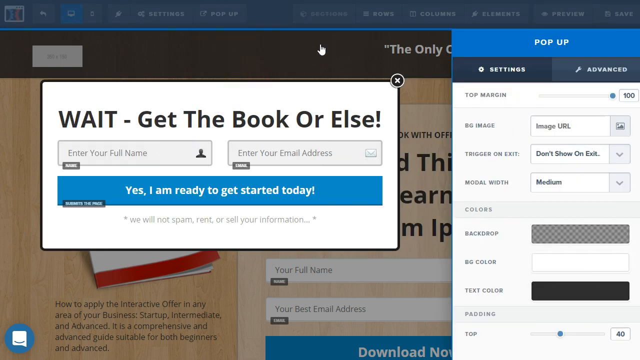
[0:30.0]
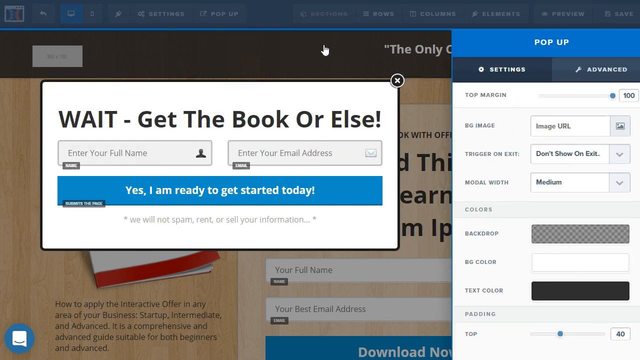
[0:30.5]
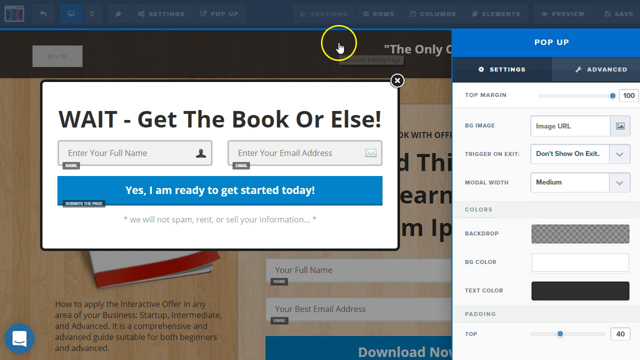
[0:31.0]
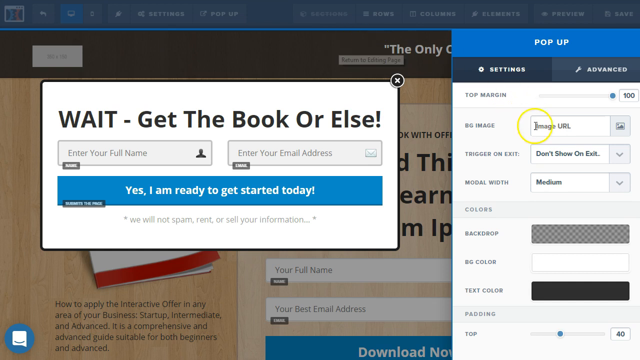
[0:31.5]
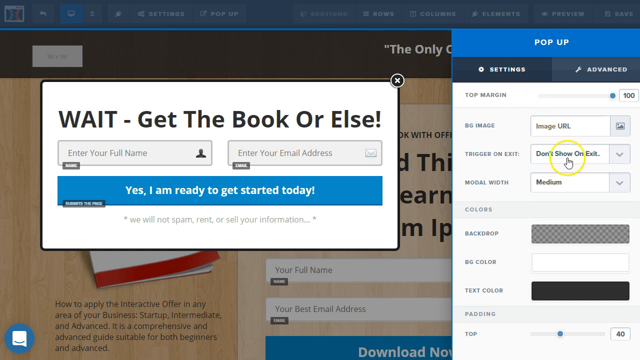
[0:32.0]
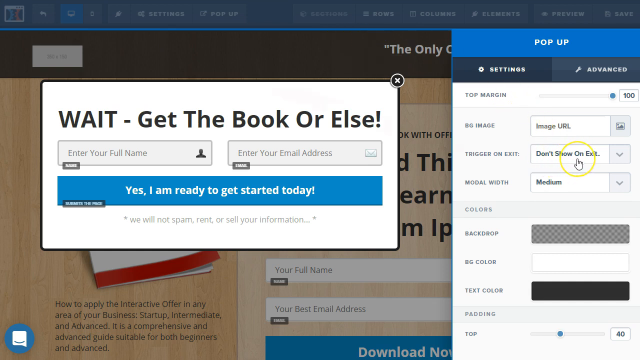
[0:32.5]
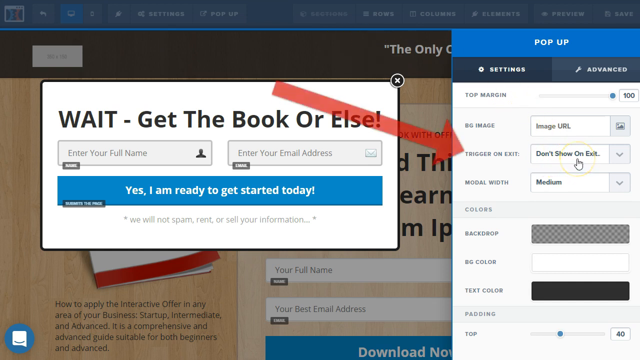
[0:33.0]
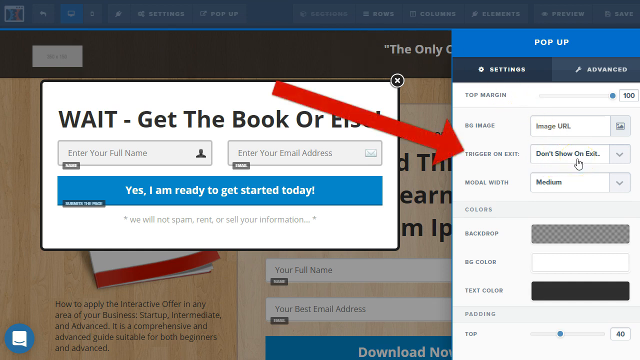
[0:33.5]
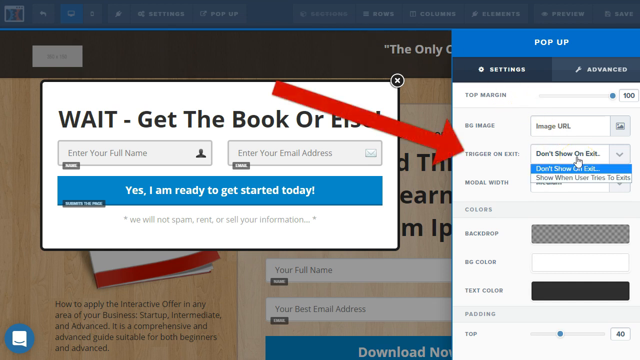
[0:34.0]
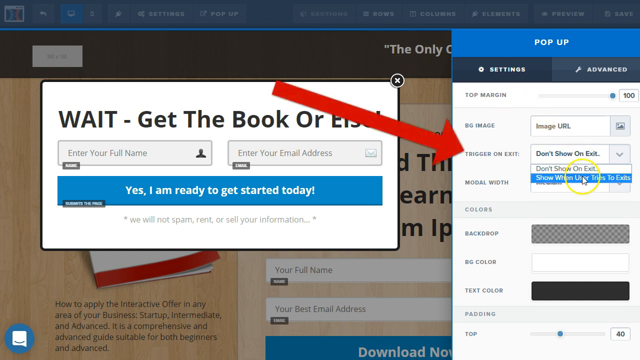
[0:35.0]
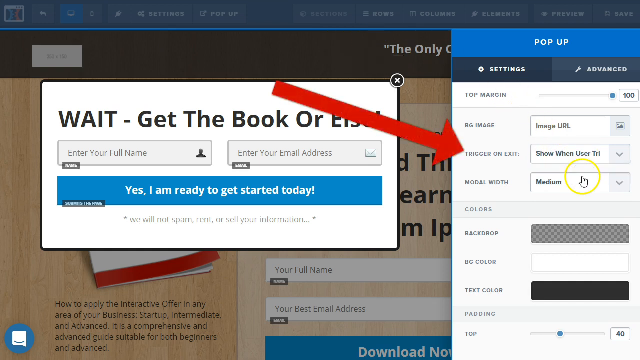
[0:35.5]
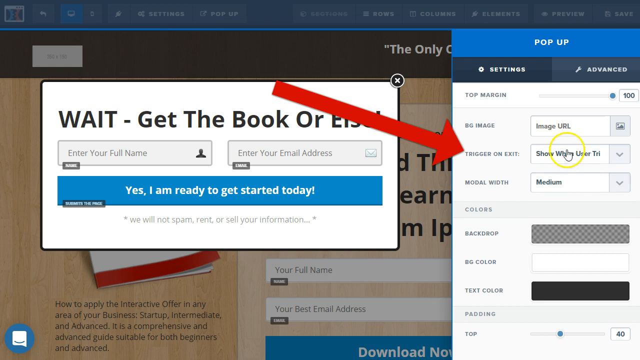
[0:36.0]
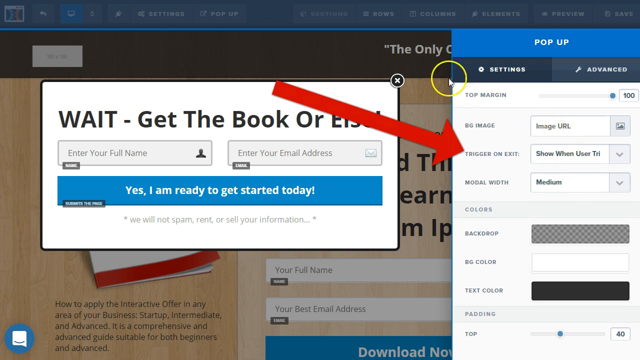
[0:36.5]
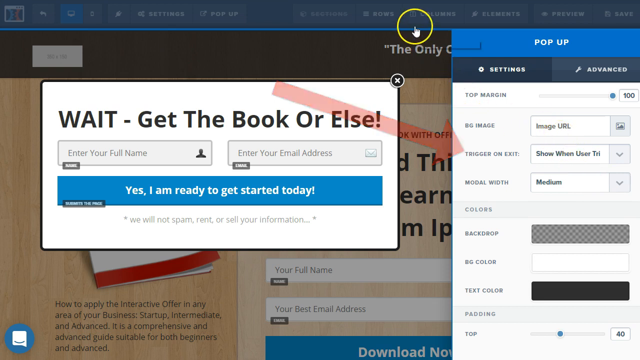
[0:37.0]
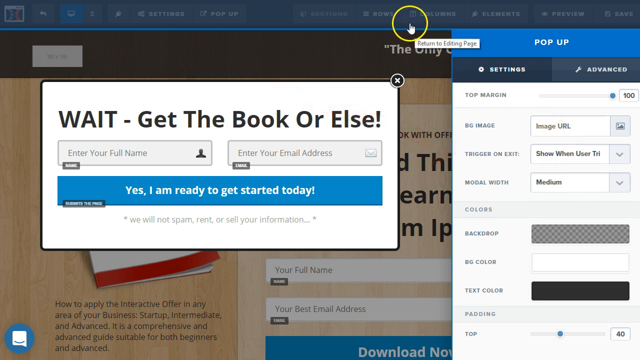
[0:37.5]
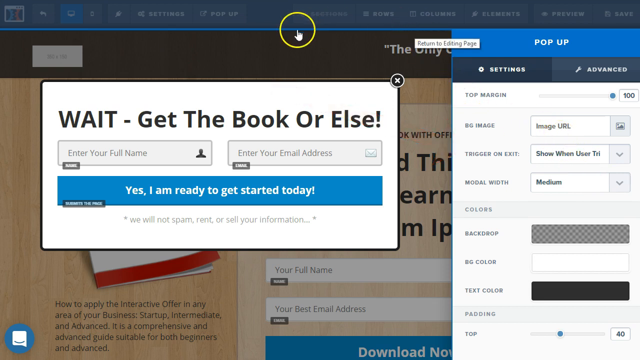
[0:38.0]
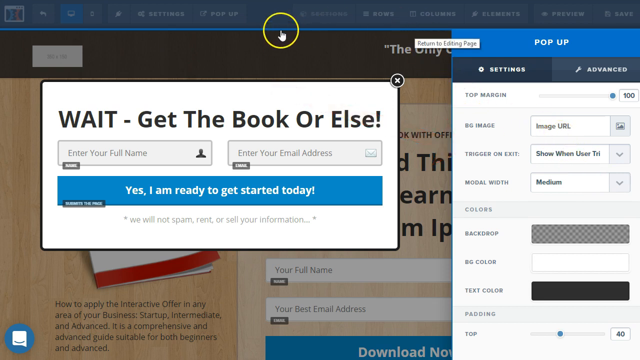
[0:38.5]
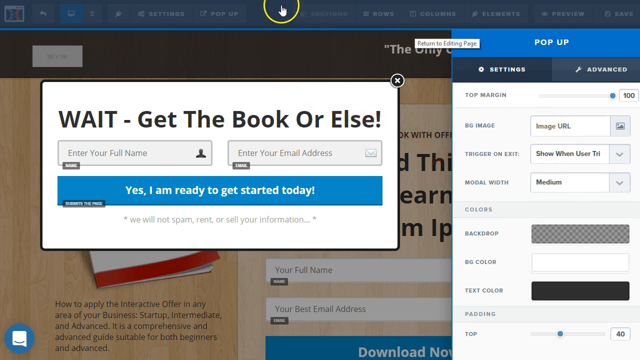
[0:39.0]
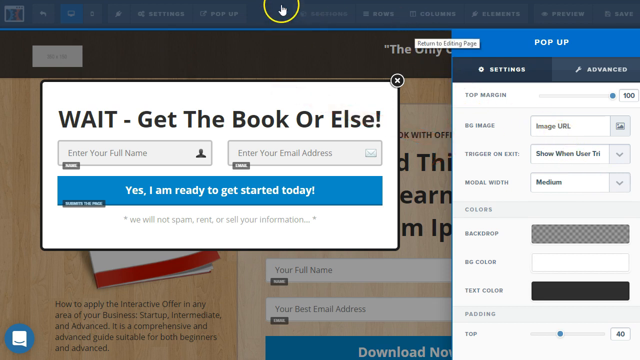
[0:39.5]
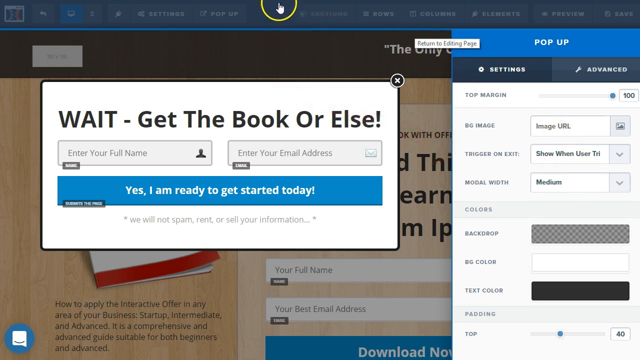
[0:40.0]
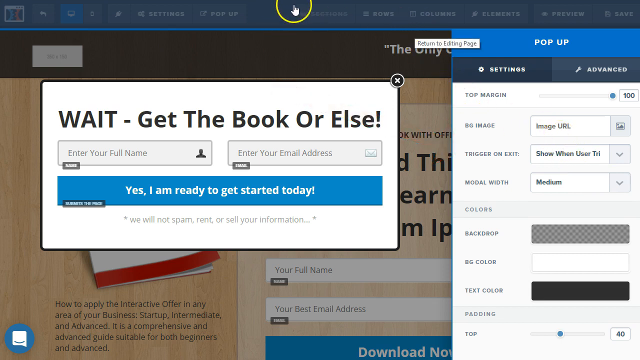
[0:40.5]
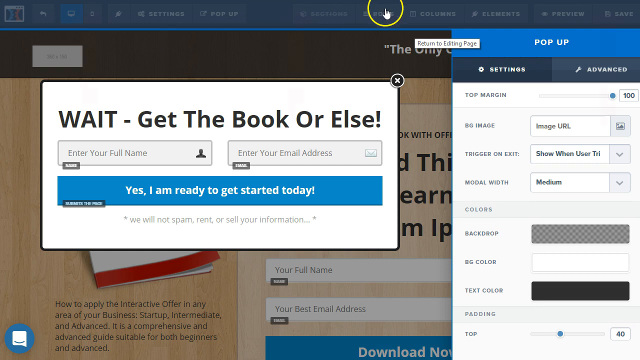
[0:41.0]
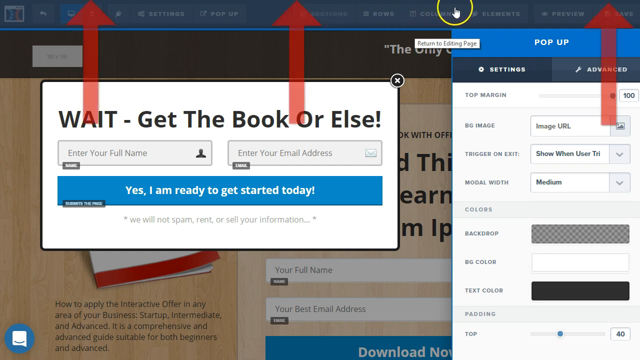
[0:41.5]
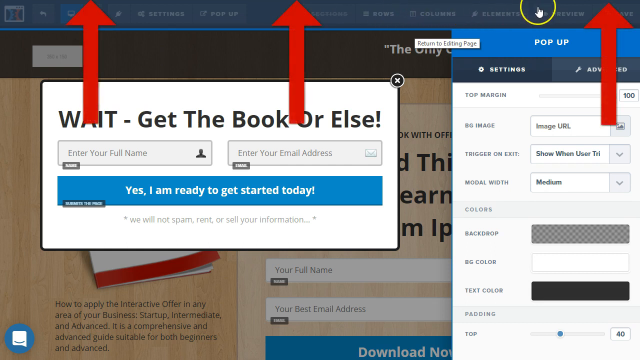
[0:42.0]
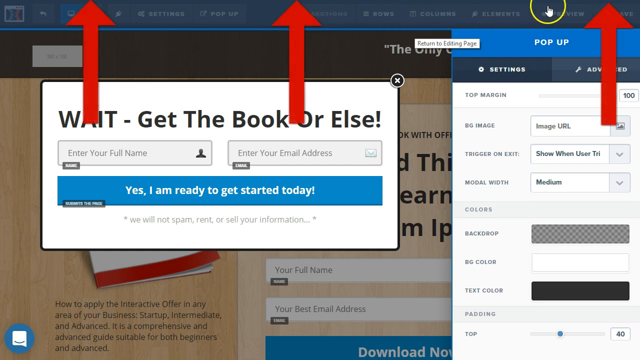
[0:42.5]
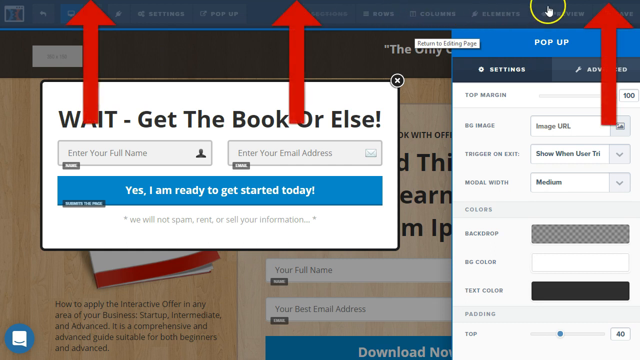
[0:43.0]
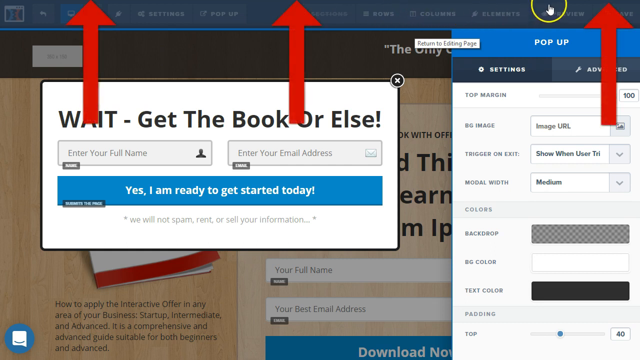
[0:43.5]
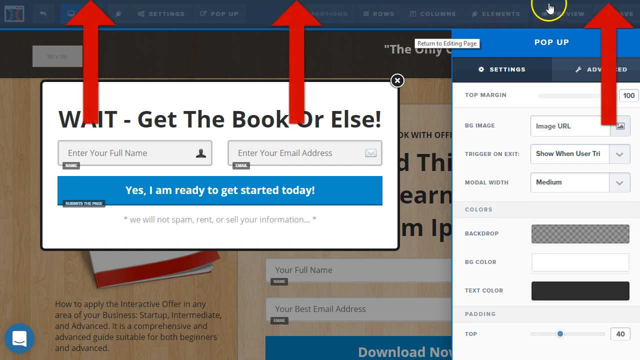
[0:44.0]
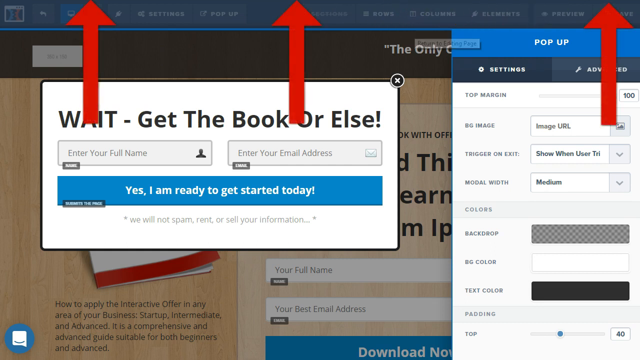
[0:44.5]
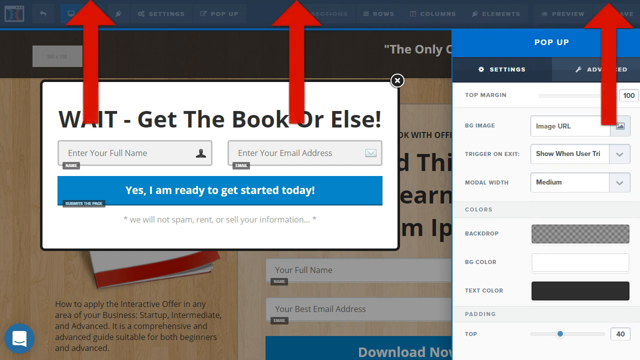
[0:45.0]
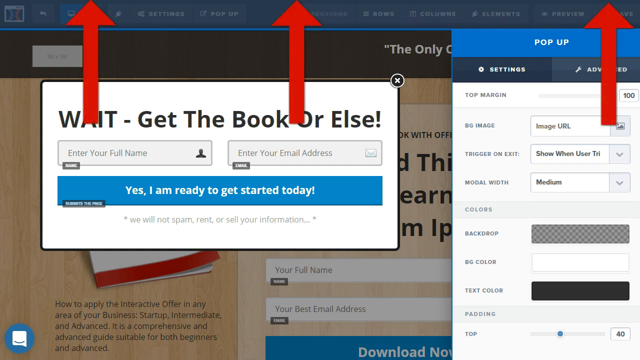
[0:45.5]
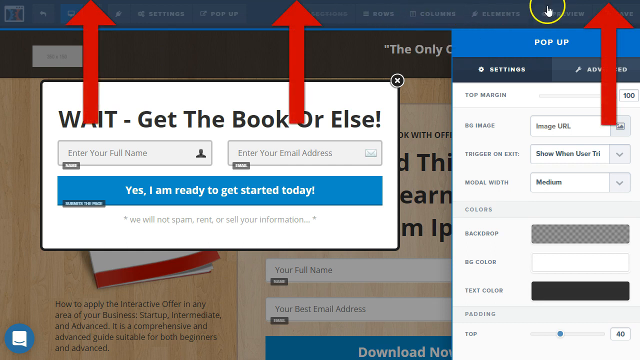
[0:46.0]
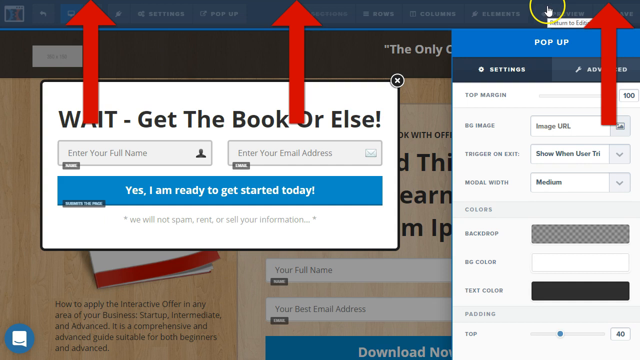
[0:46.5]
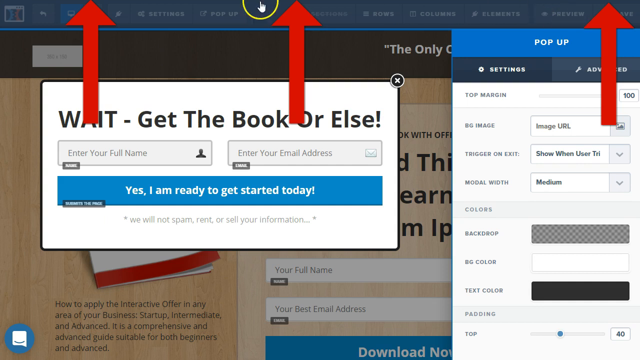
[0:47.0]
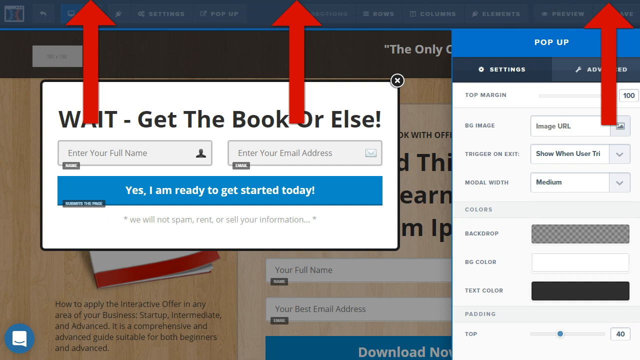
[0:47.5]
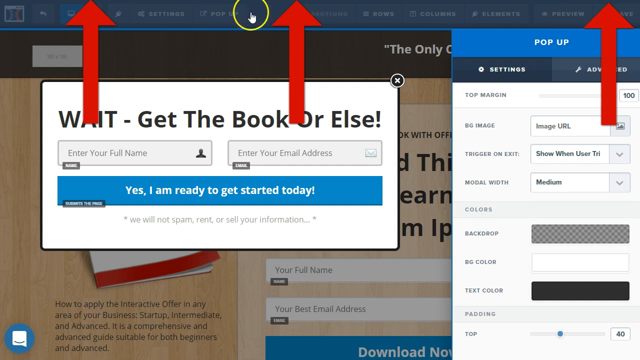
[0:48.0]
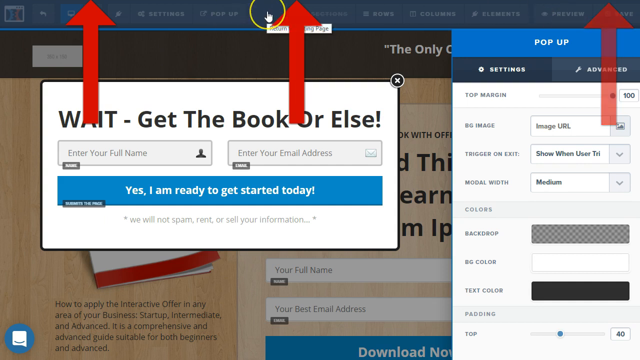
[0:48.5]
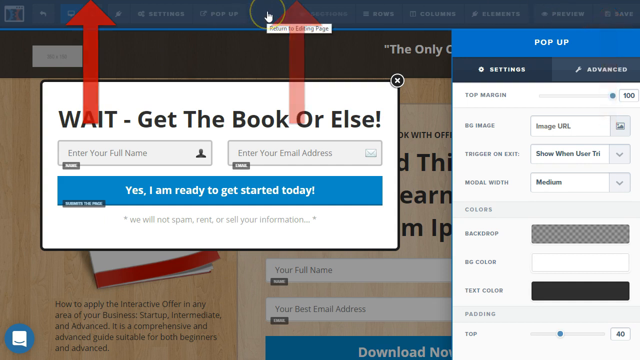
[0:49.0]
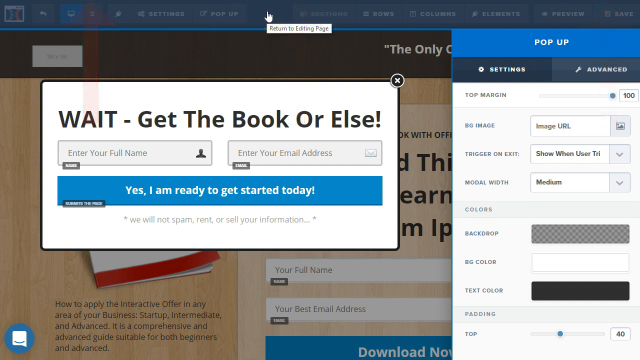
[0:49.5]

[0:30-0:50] Something has popped up on the left of the page that says "wait get the book or else", with fields reading "enter your full name" and "enter your email address" and a button to click that says "yes. I am ready to get started today". A pop-up in the right area of the video says "pop-up" and has "settings" and "advanced", with different options that can be changed, including the backdrop, the BG color and the text color. The person goes down to where it says "don't show on exit" and clicks on "show when user try". They then go up to the top, where three red arrows point upward. They click on or show different areas at the top, where it says "return to entry", and as they move the cursor it also says "return to editing page" in that section. There are two pop-ups on the page at this moment.